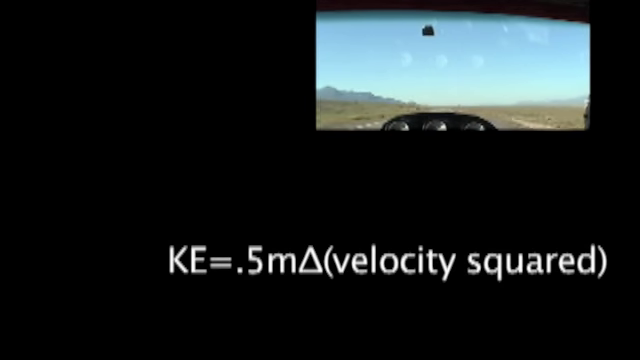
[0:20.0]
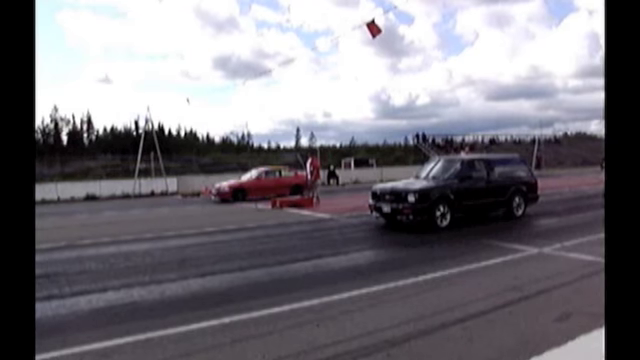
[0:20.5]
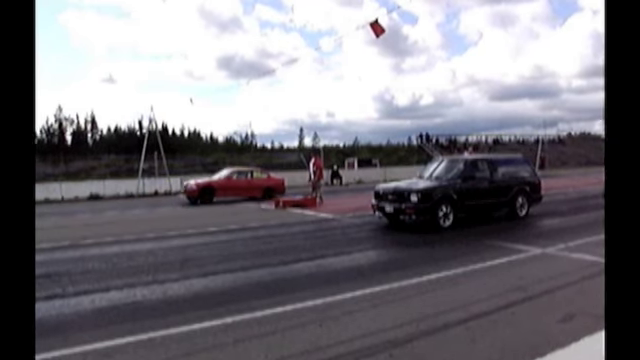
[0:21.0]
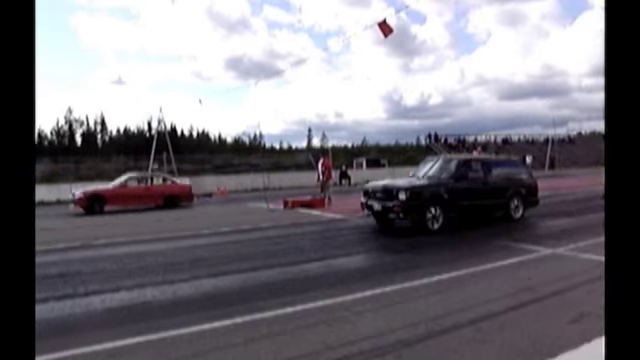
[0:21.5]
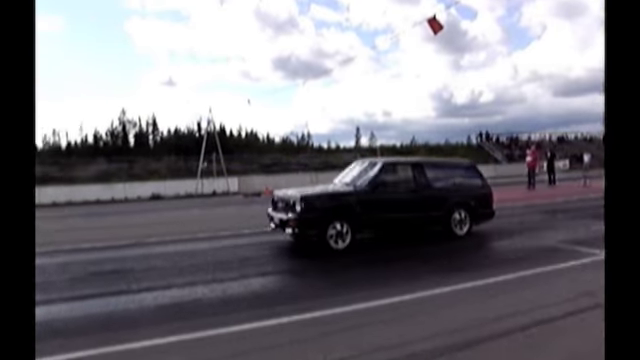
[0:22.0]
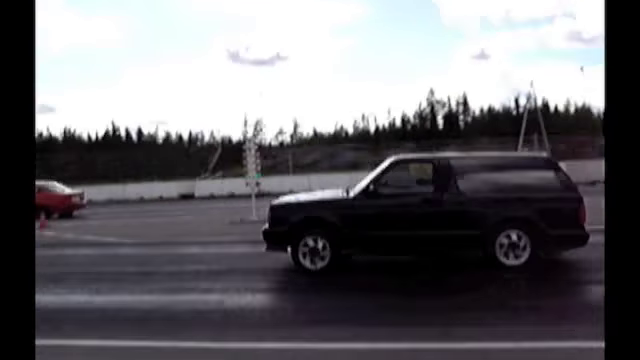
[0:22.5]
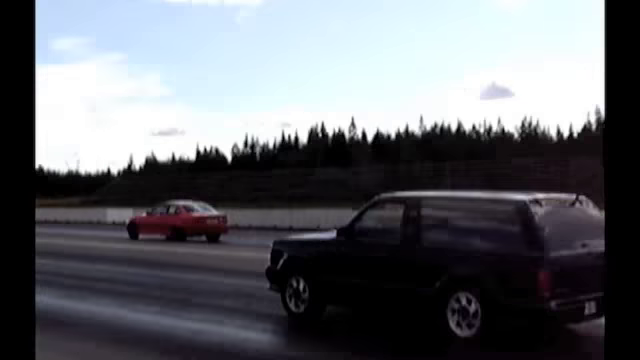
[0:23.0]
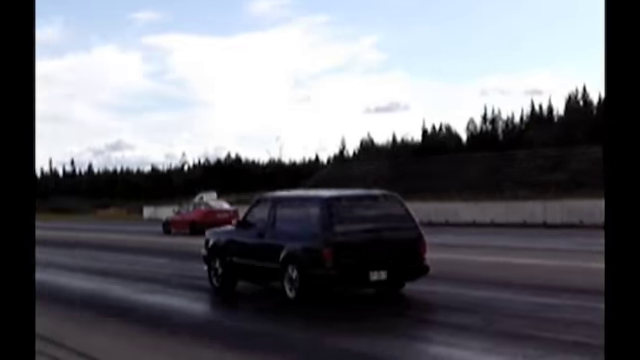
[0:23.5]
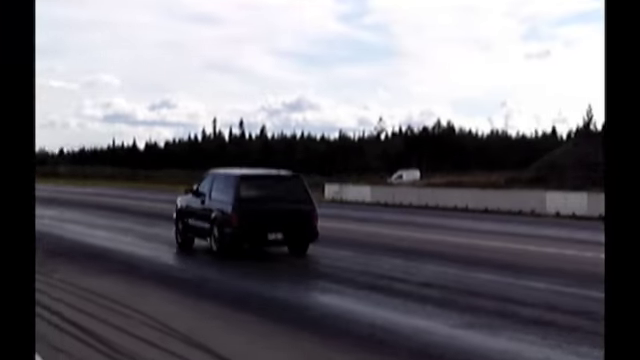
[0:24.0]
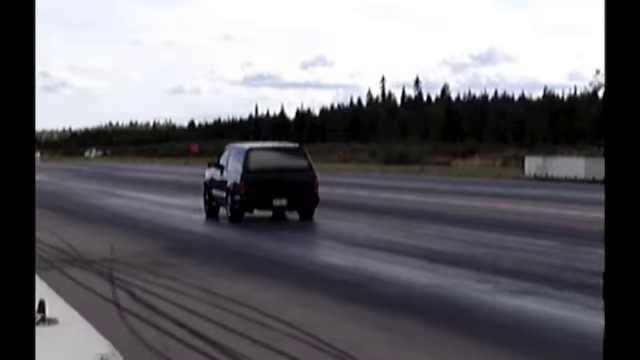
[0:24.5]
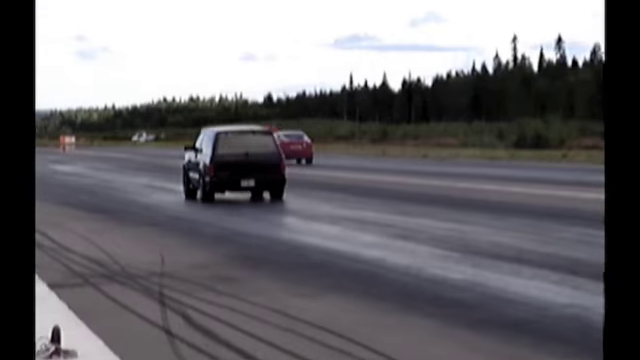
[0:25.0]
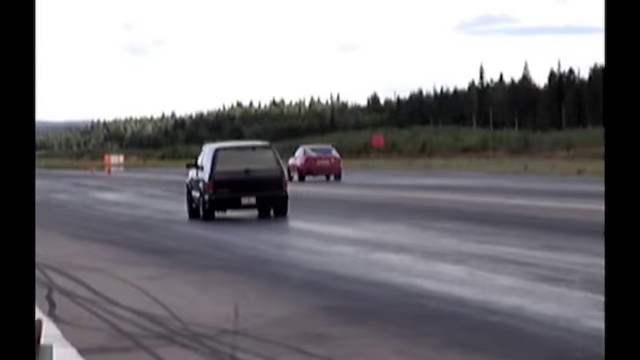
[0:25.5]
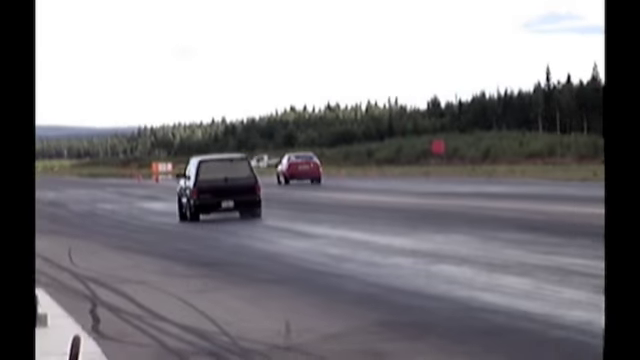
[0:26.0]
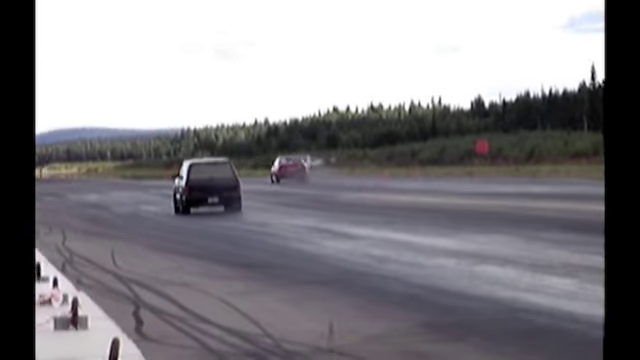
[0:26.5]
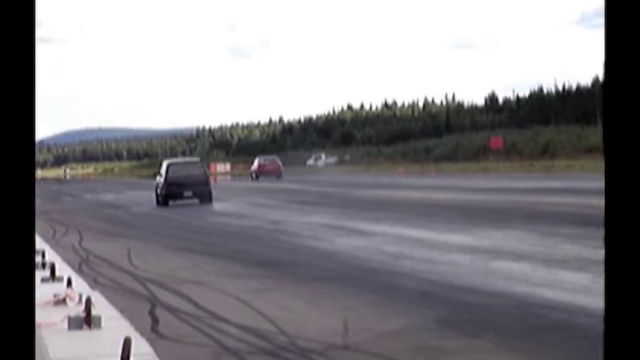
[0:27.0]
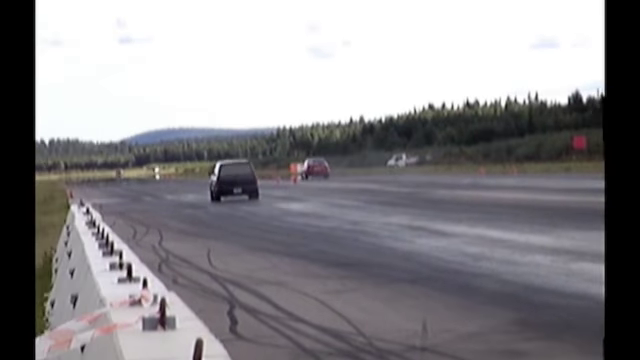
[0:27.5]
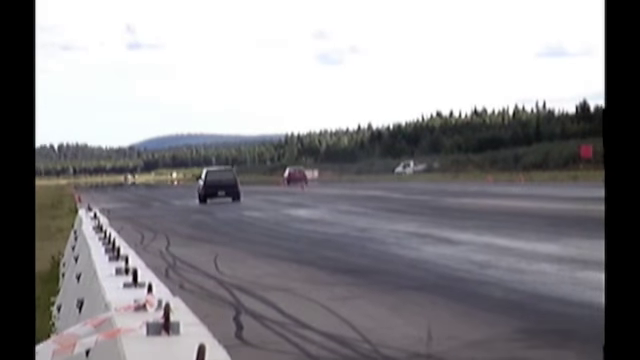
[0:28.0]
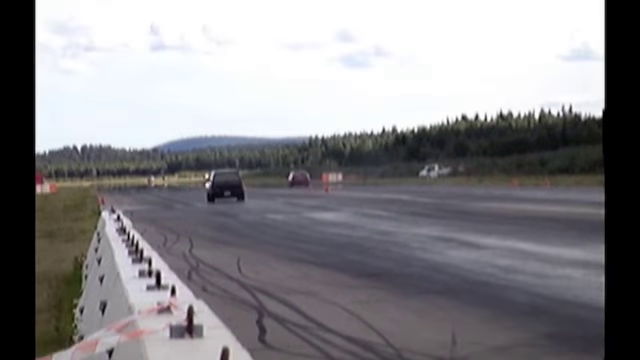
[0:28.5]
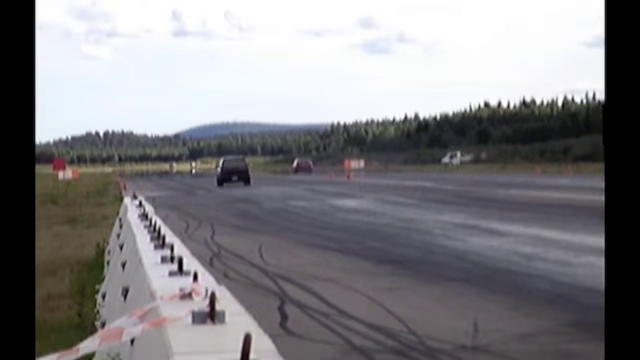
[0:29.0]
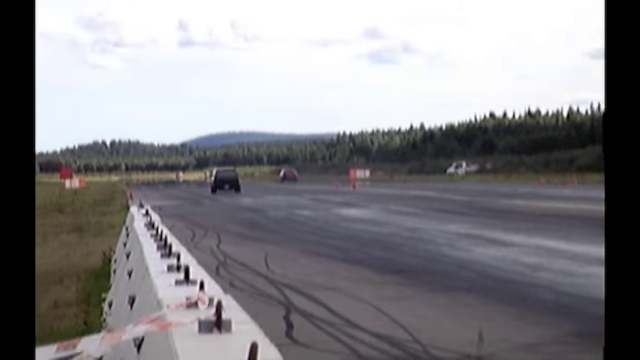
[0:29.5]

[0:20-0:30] A possible race between two vehicles begins: a red vehicle on the left and a black vehicle on the right, with what appears to be a flag between them. Suddenly the cars take off, the red car seemingly faster than the black one. The camera turns to adjust, showing both cars going down the road. The red car is going faster as both speed up, and what looks like maybe rainfall splatters up beneath the red car's tires. Trees surround them, there are cones to the left of the road, and several red and white signs are visible in the distance. In the distance to the right, next to the forest, is what appears to be a small white truck. The skies look clear with lots of clouds, and possibly very large hills are visible in the background past the forest.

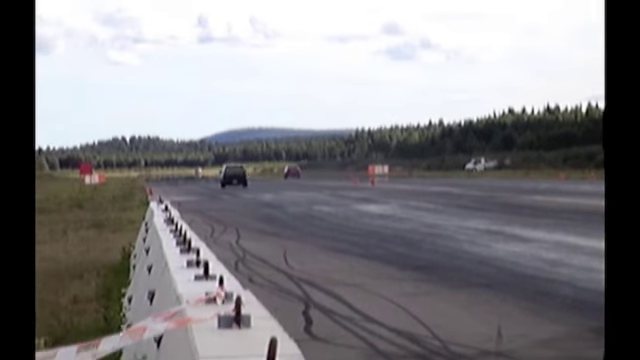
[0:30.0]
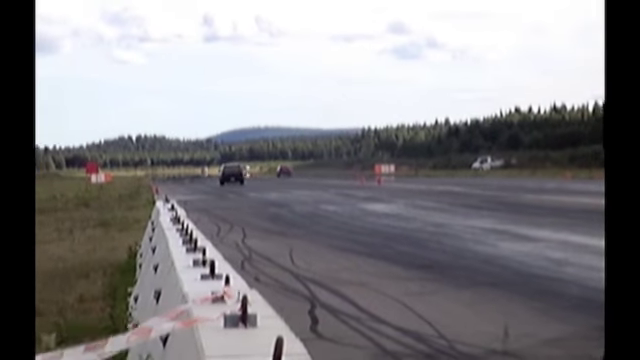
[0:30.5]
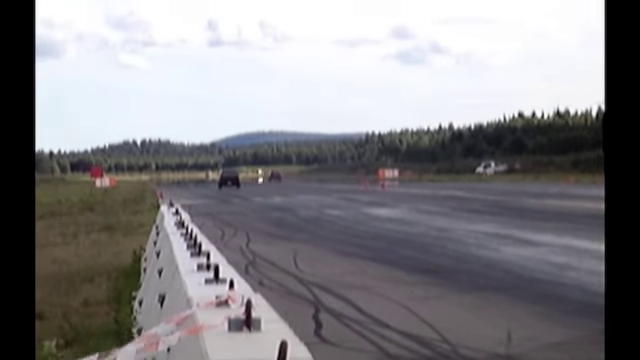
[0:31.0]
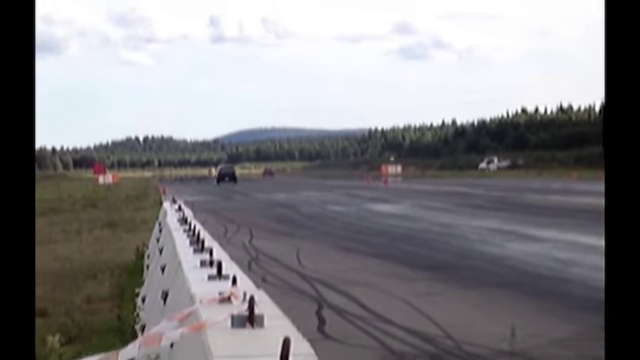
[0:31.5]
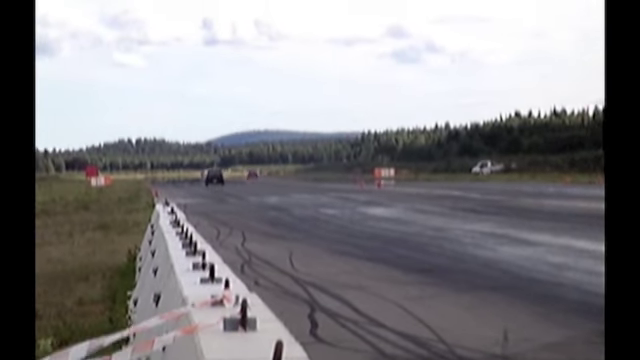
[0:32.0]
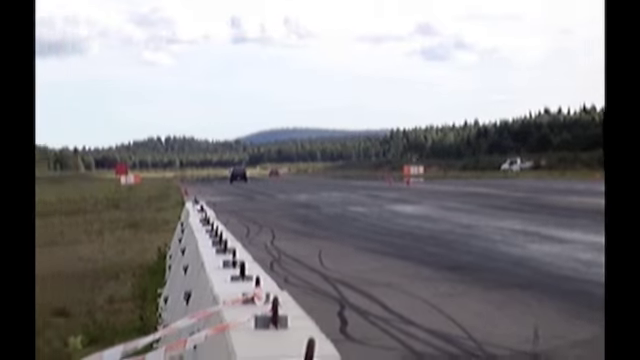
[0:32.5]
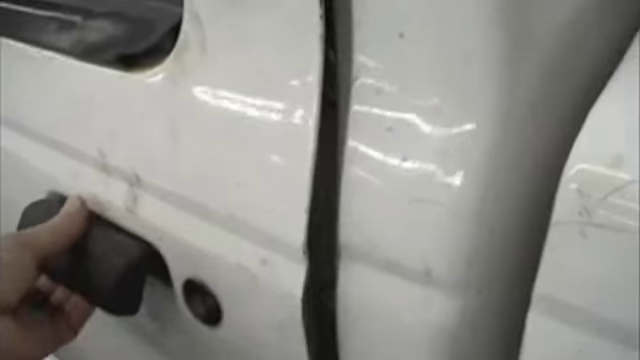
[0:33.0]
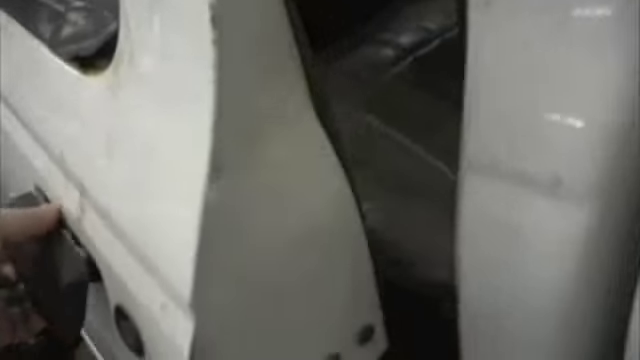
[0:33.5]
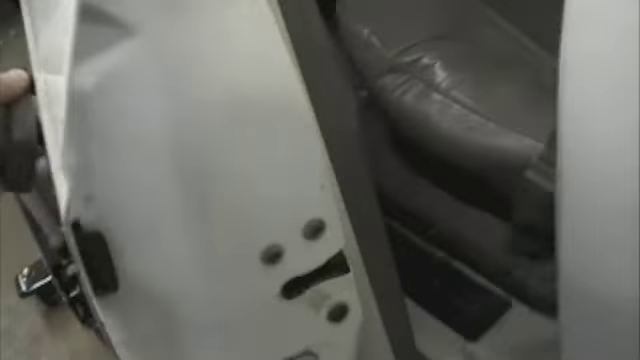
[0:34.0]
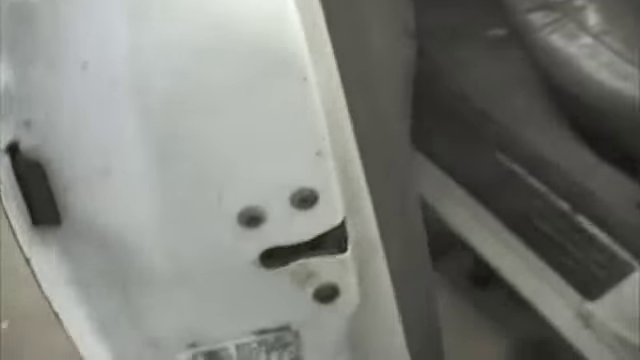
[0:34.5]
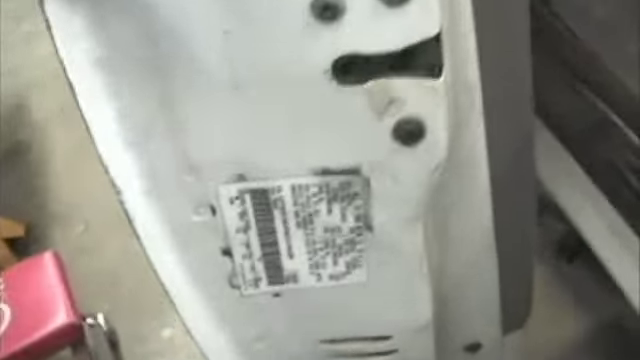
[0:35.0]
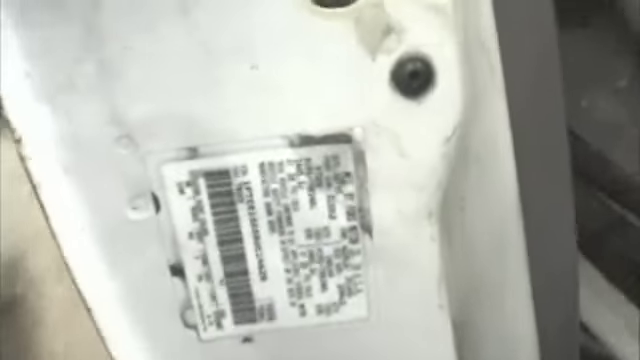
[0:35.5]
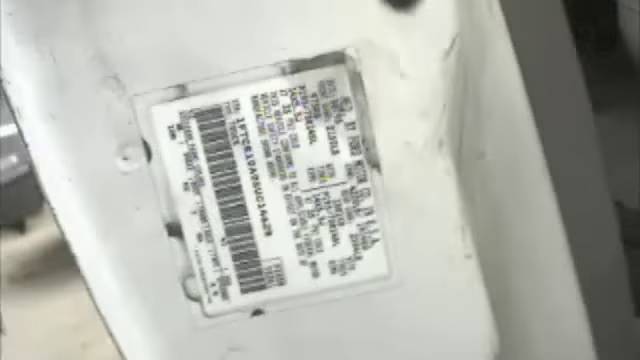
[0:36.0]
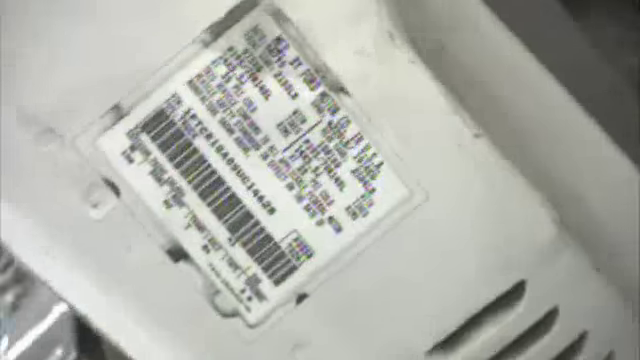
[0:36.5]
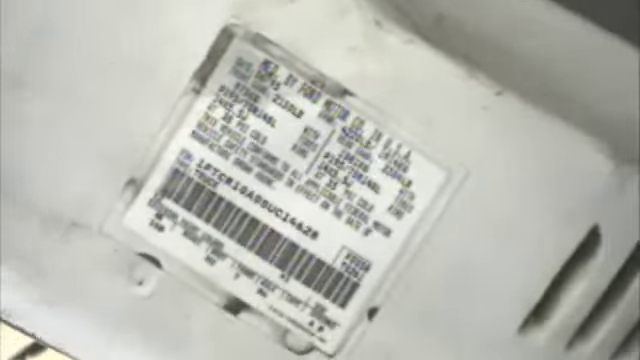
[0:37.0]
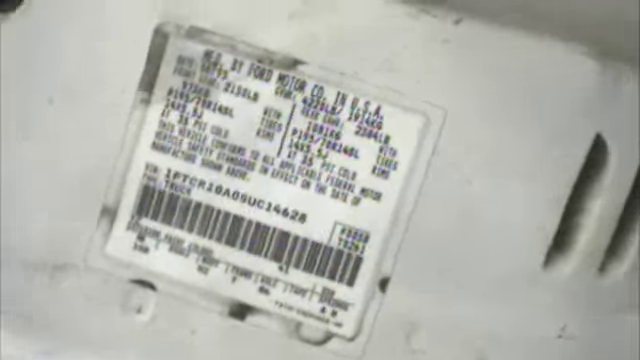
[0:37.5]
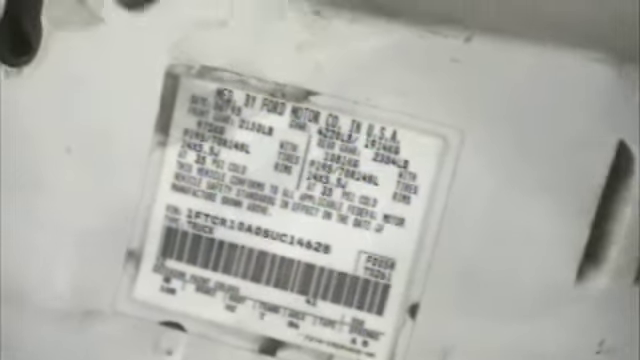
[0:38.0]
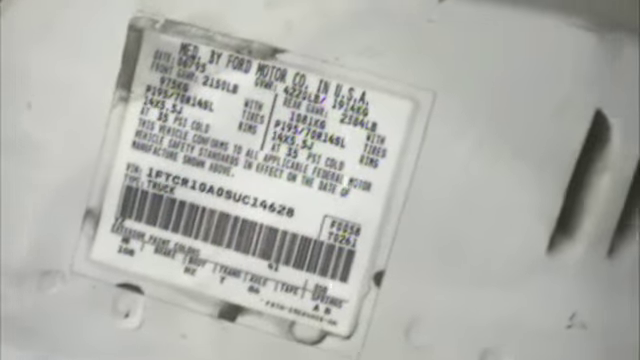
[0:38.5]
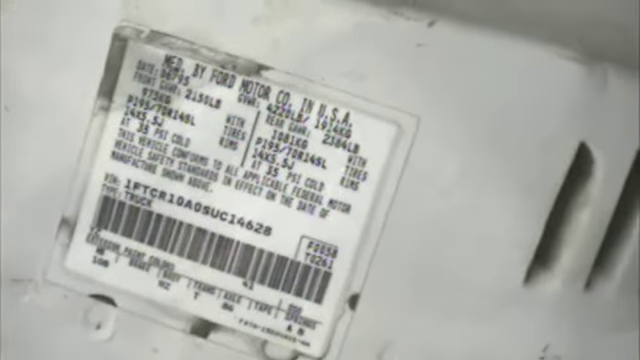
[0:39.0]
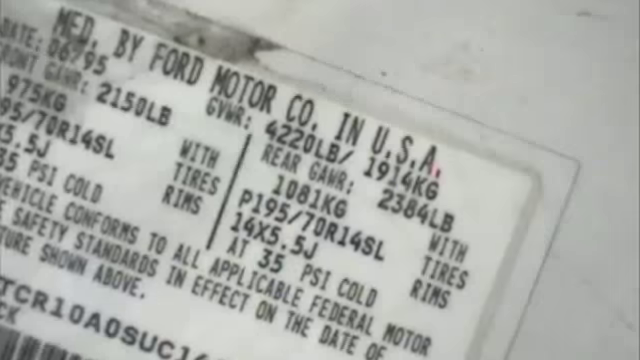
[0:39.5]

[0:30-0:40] The back of the black car is visible far down the road, with the red car faintly visible next to it, as they keep going. The scene then changes to a hand opening the handle of what appears to be a white truck. The camera pans in to the inside of the driver's side door, where a white label lists various details about the car, such as tire sizes. It zooms in, showing more text that reads "by Ford Motor Co. in the U.S.A." The white label has black writing and appears slightly weathered at its top left. The white truck may have dirt or possibly smudges on it.